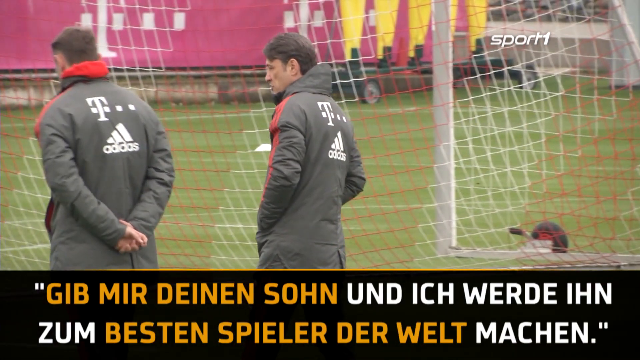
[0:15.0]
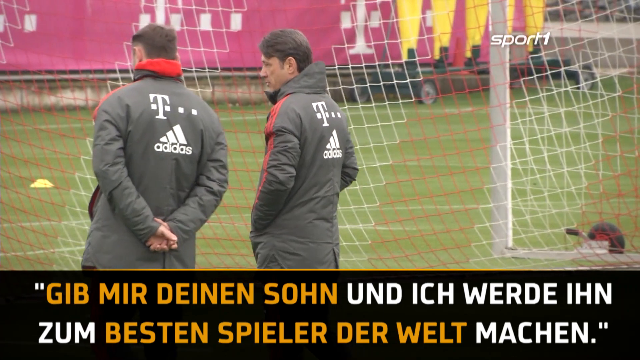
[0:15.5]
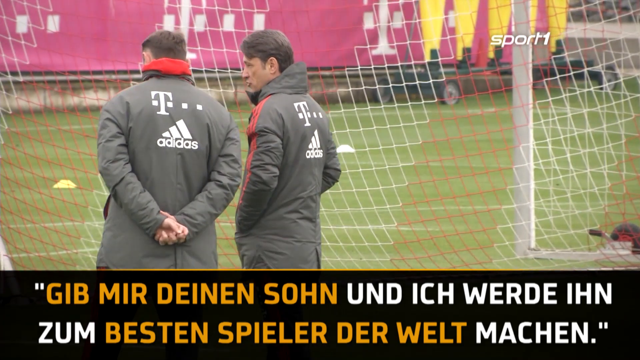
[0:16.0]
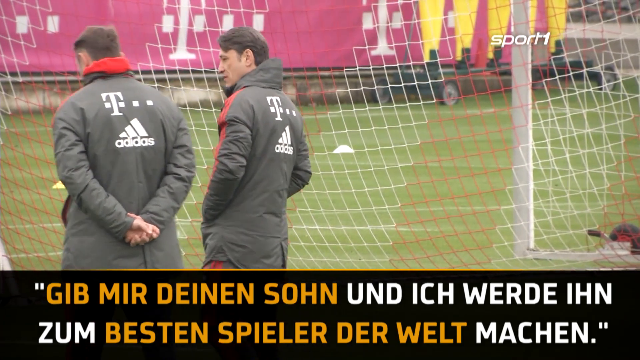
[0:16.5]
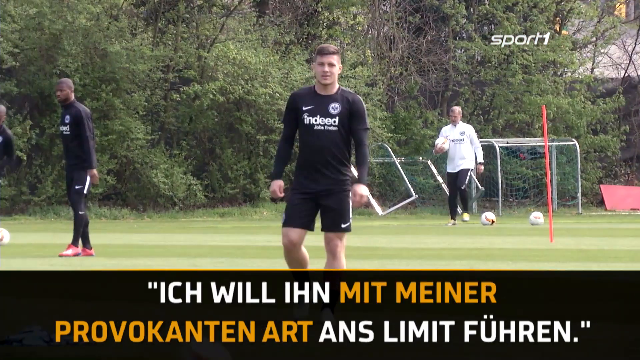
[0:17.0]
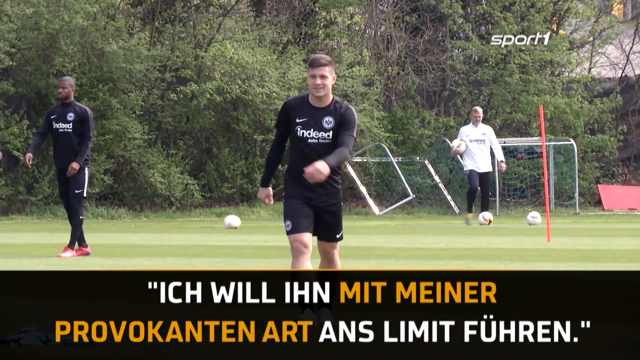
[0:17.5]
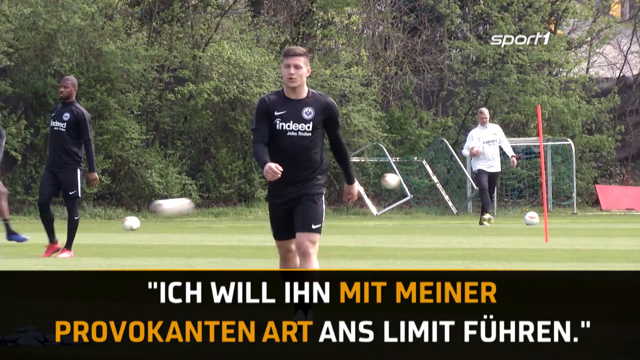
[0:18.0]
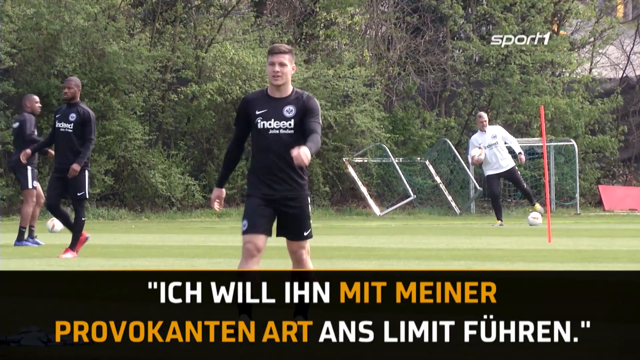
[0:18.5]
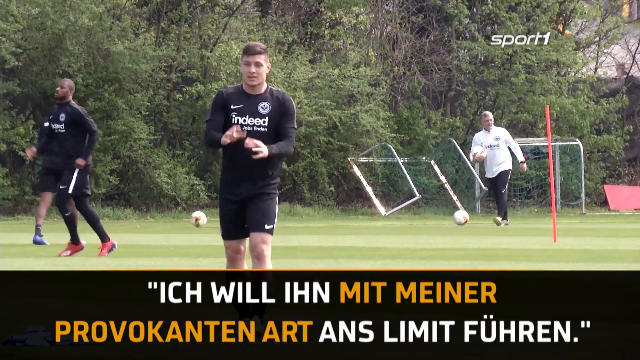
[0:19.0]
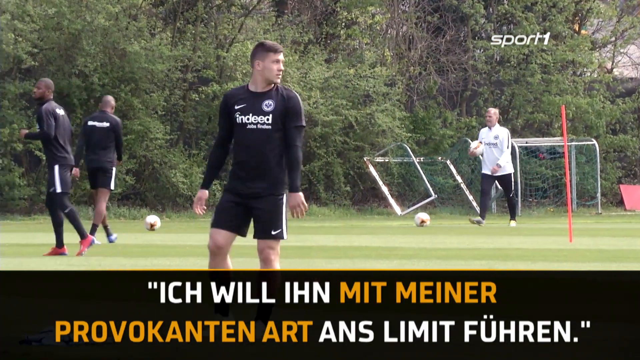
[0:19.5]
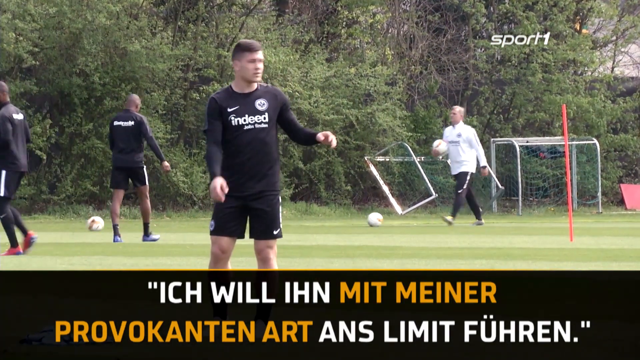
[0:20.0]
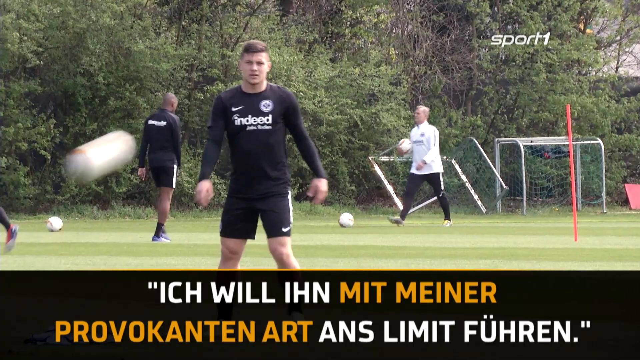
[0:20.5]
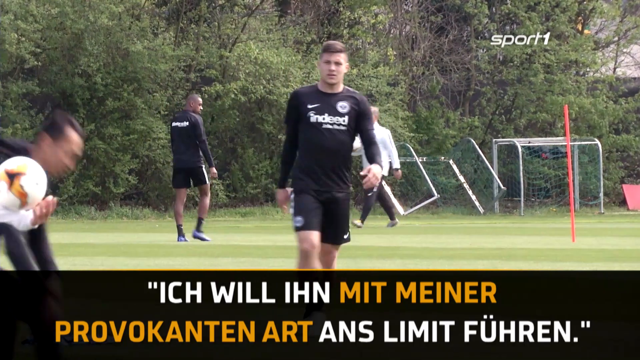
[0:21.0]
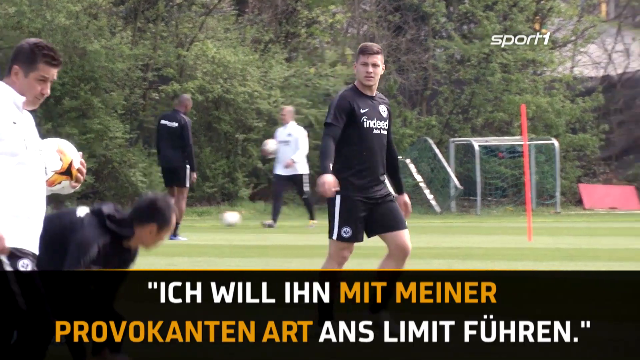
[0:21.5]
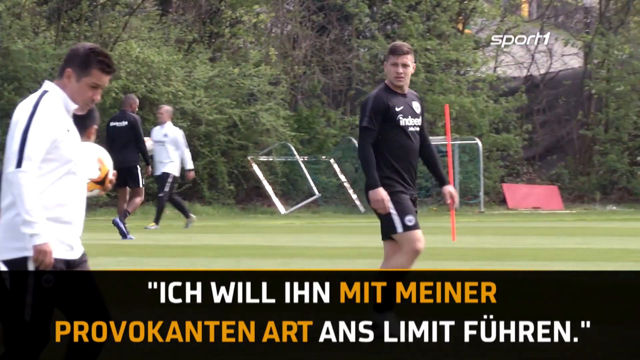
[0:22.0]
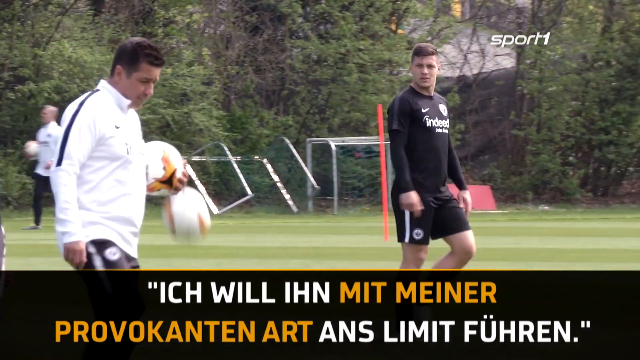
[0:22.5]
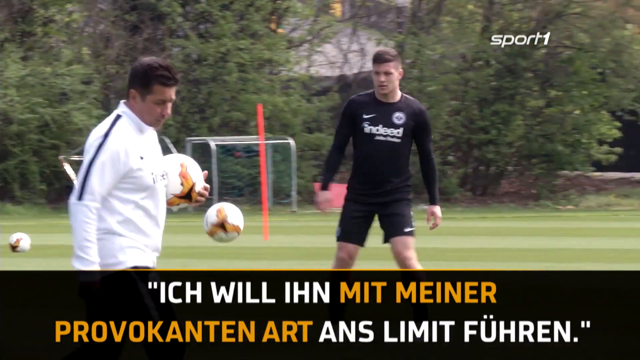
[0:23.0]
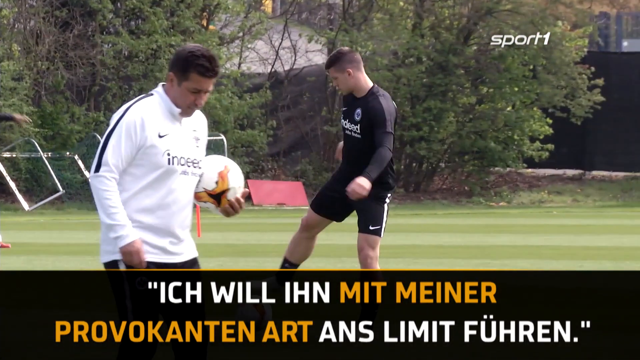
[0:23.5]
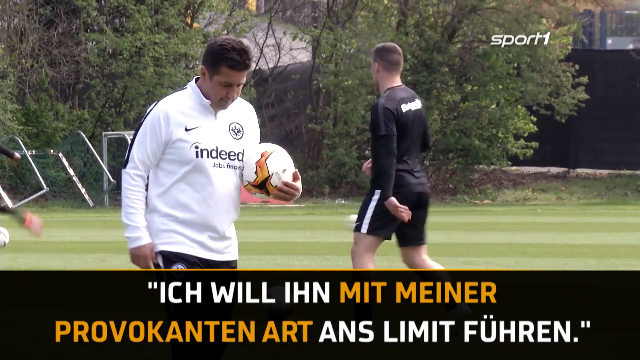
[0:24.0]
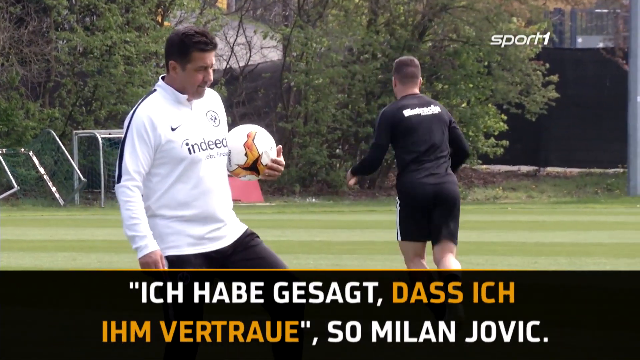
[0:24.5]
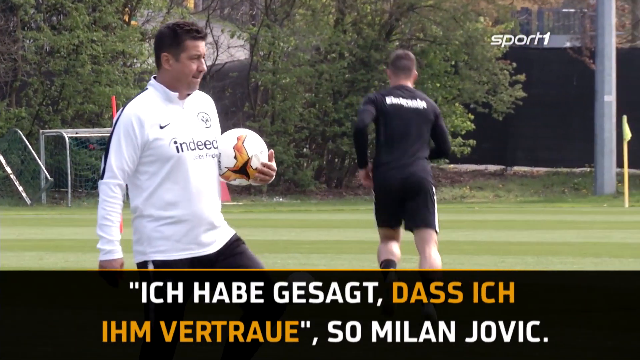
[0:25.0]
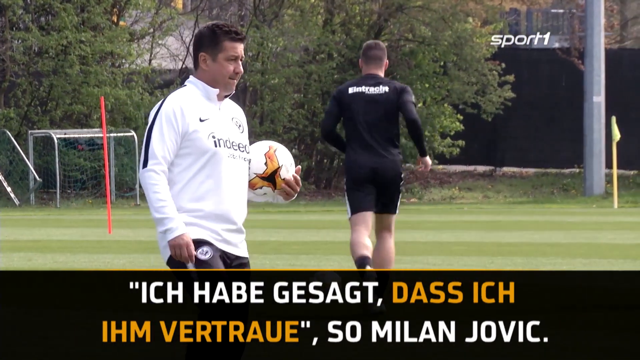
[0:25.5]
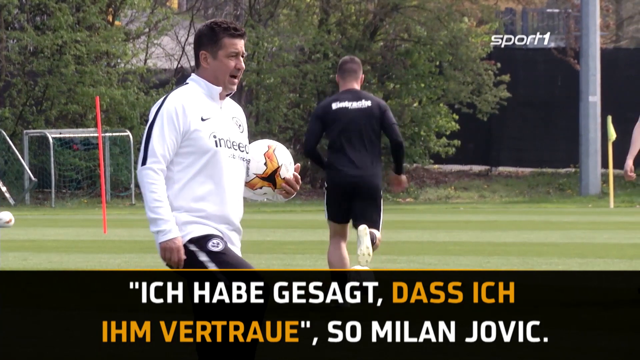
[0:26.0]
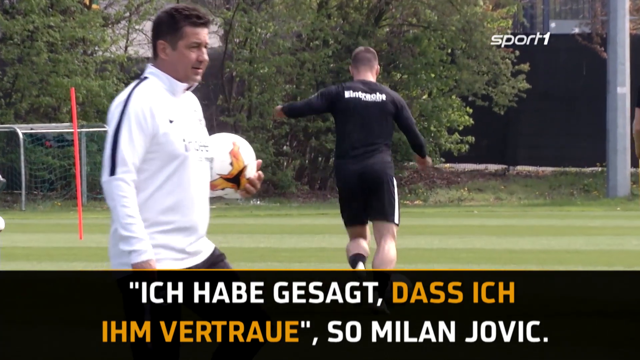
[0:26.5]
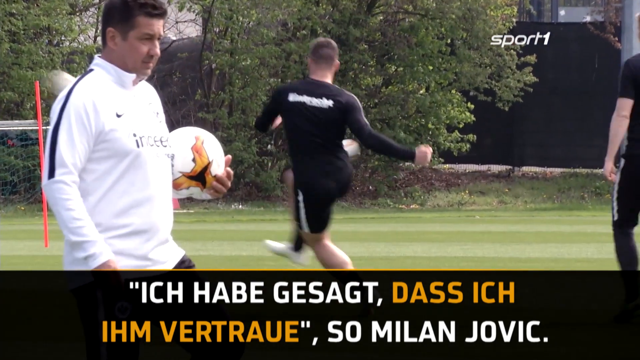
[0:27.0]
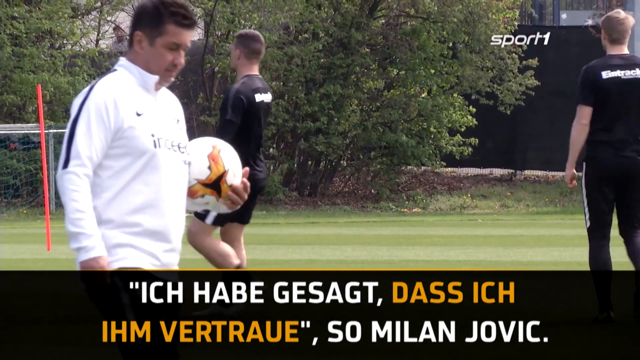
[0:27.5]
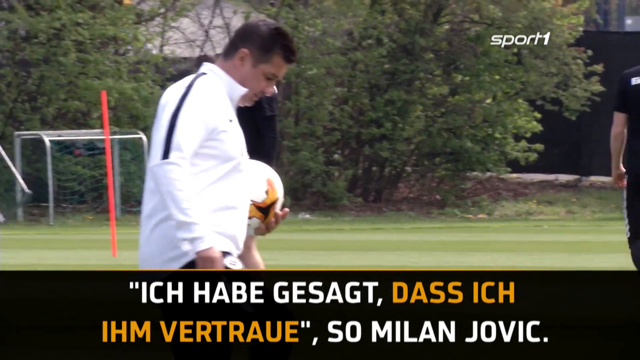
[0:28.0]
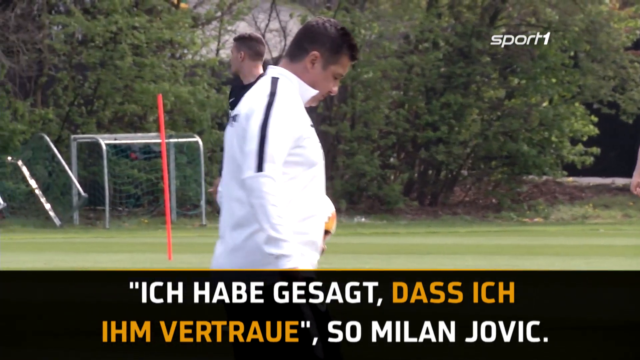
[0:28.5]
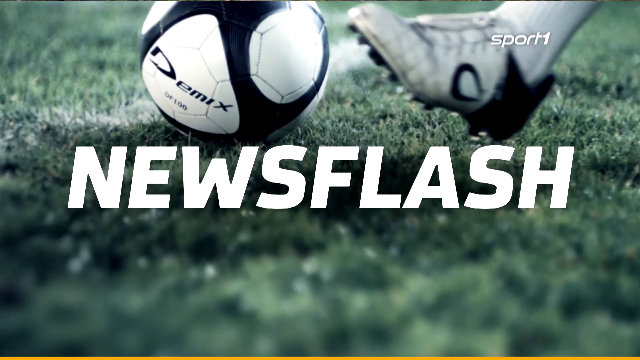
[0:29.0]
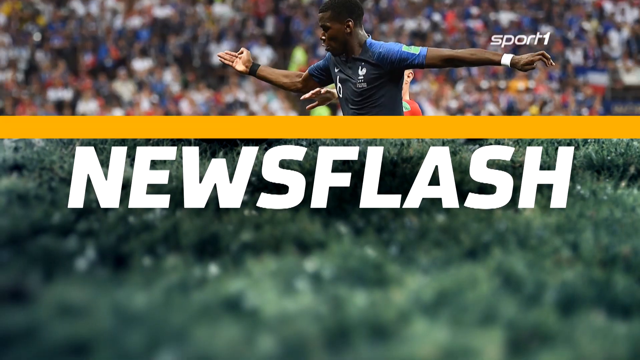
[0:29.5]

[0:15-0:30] The team is split up, working on different drills. The shot focuses on a player in a black long-sleeve shirt and black shorts who receives a ball thrown to him by a teammate, then turns around and kicks it toward a goal. In the background, people who may be coaches, apparently in white jackets, throw balls to the players in black. Soccer balls fly in many different directions as different players kick or throw them to each other. At the very end, a segment starts that says "News flash" and looks like it is introducing a new segment; it features a cleat and a soccer ball that look somewhat like a stock image.